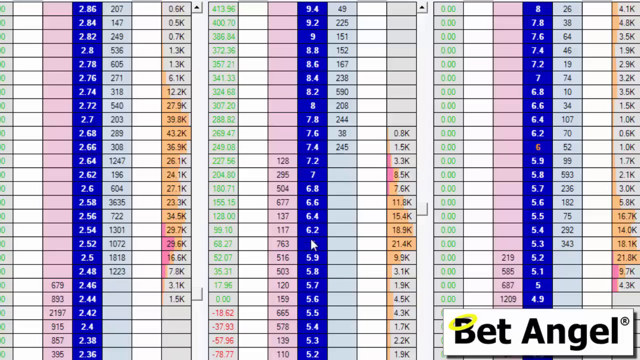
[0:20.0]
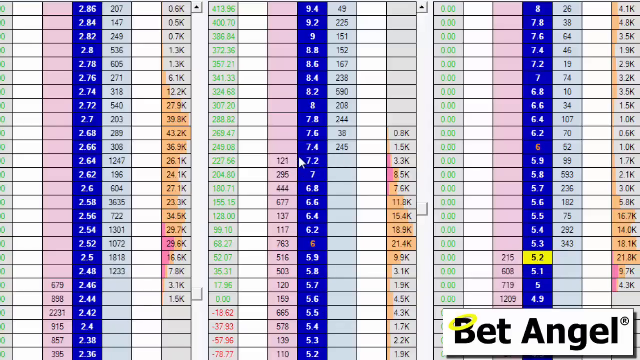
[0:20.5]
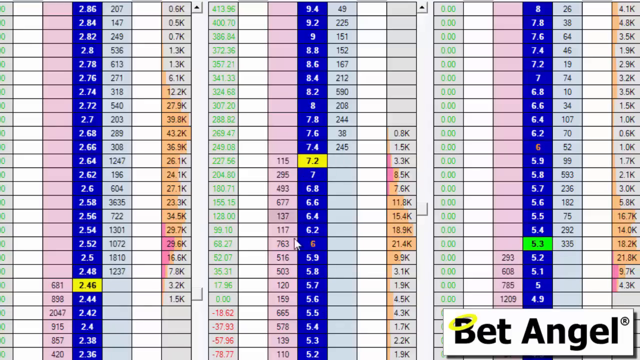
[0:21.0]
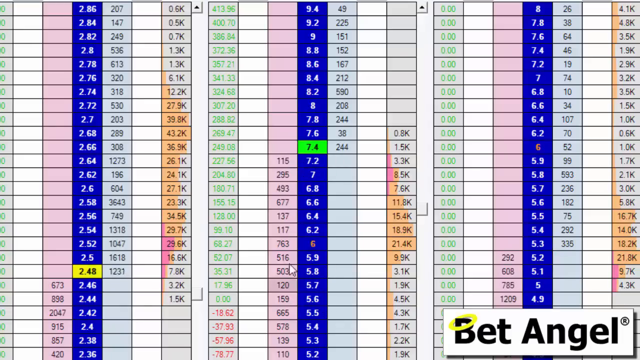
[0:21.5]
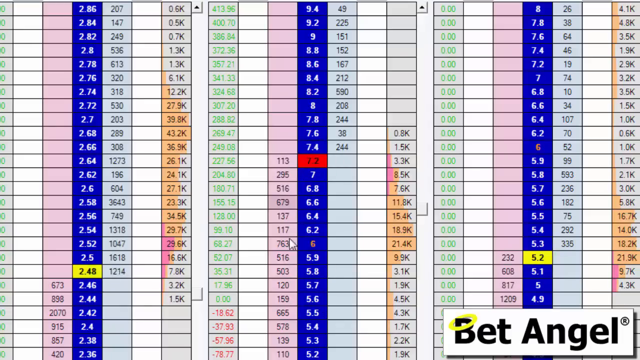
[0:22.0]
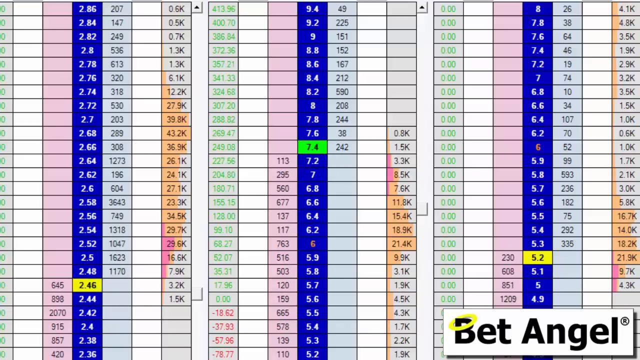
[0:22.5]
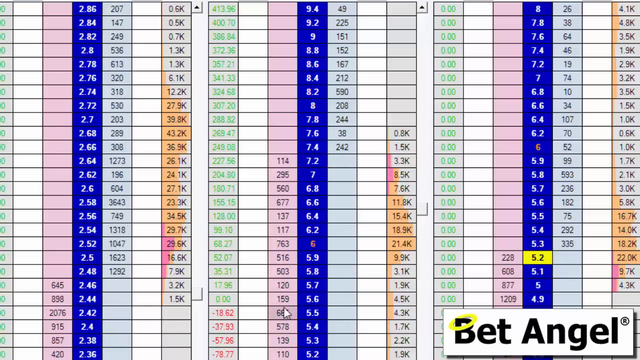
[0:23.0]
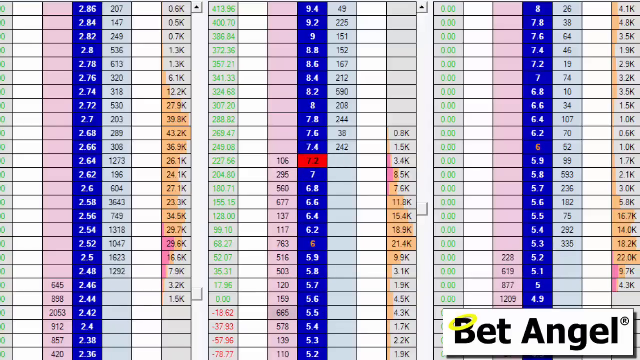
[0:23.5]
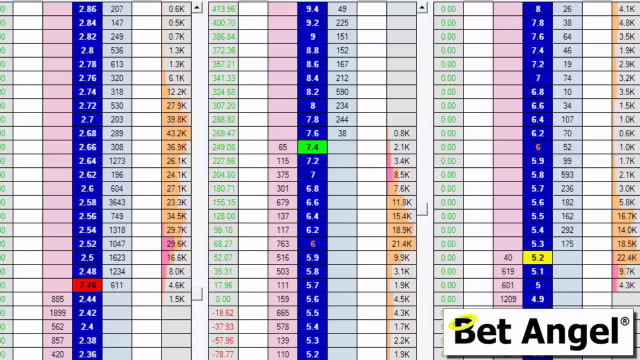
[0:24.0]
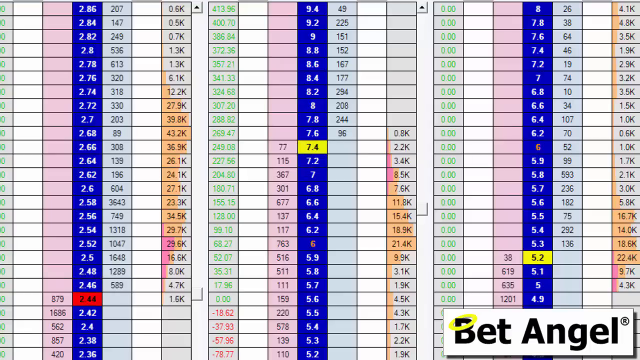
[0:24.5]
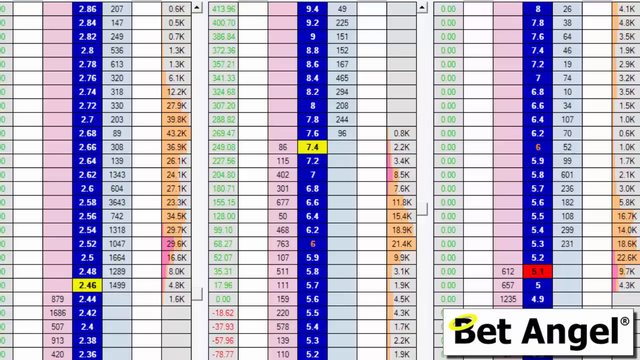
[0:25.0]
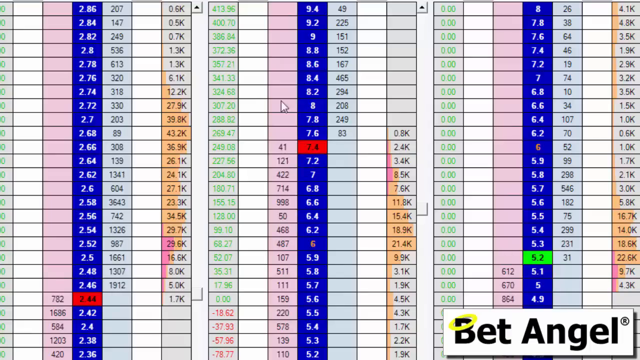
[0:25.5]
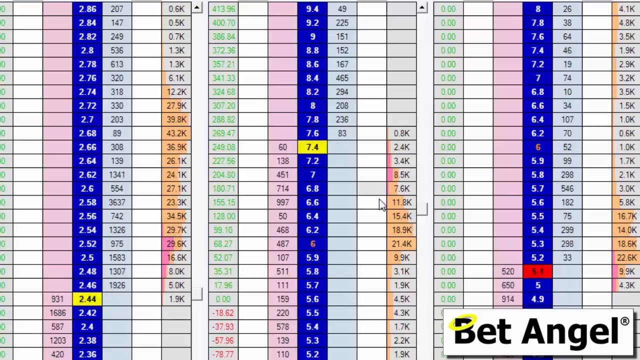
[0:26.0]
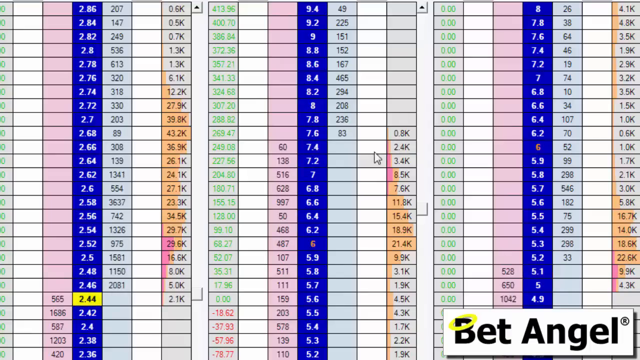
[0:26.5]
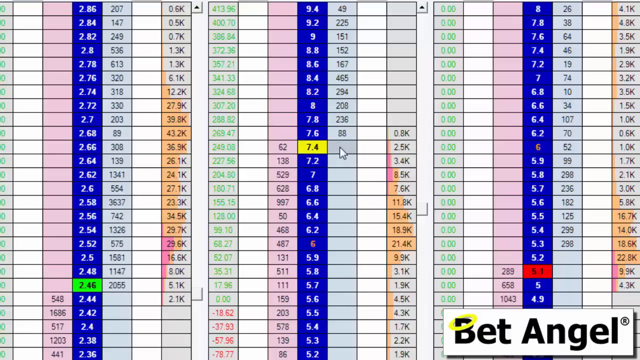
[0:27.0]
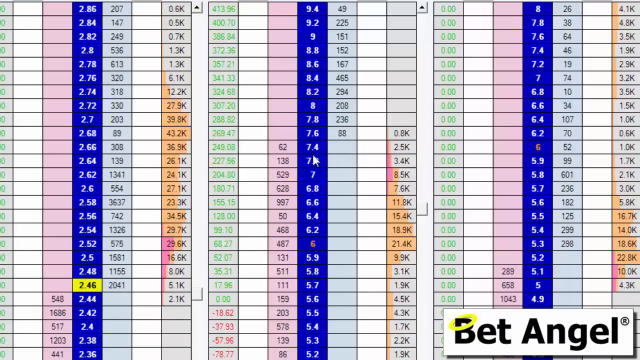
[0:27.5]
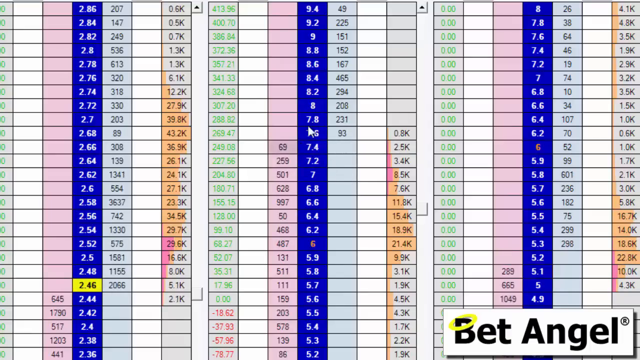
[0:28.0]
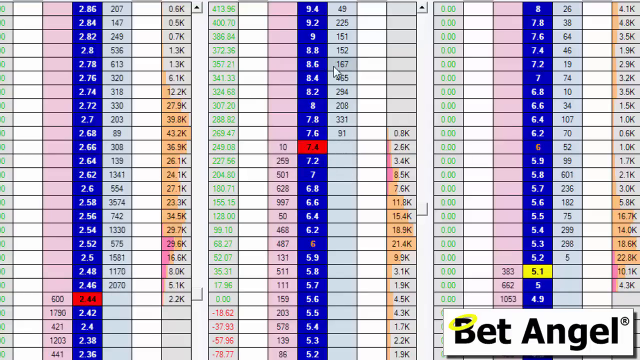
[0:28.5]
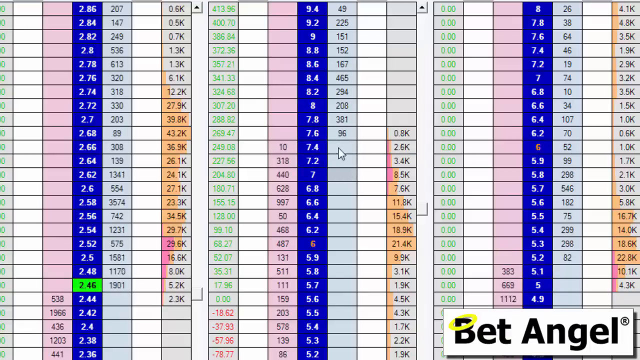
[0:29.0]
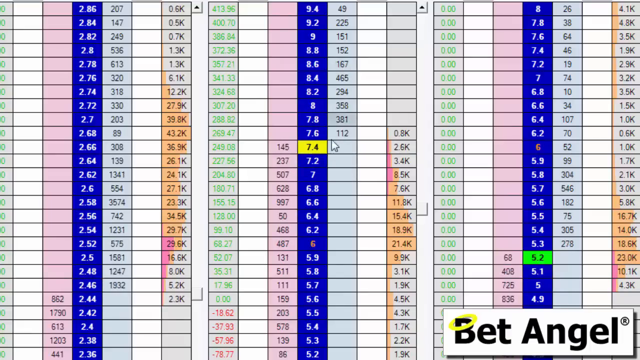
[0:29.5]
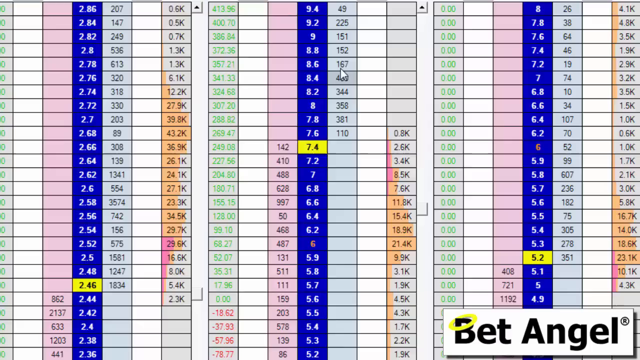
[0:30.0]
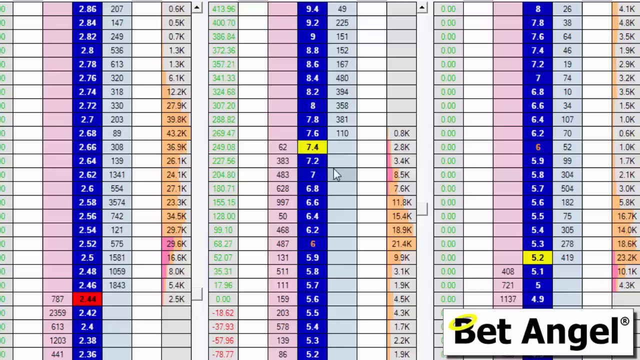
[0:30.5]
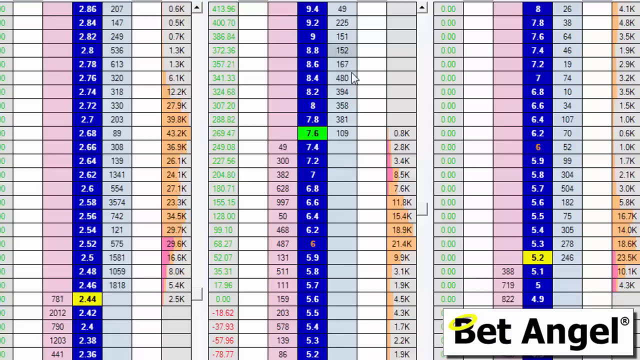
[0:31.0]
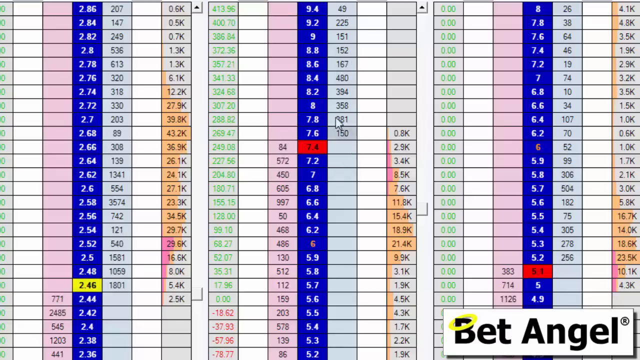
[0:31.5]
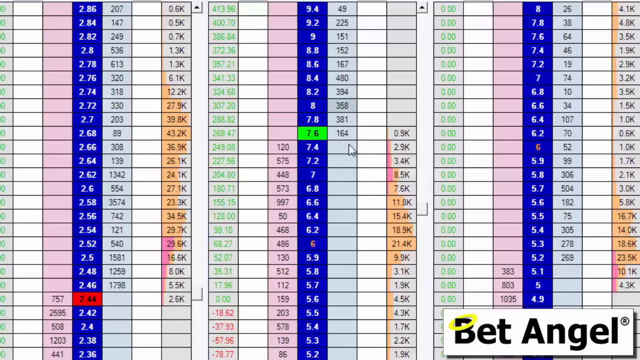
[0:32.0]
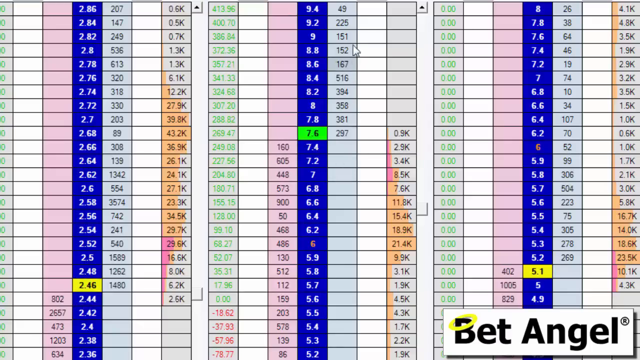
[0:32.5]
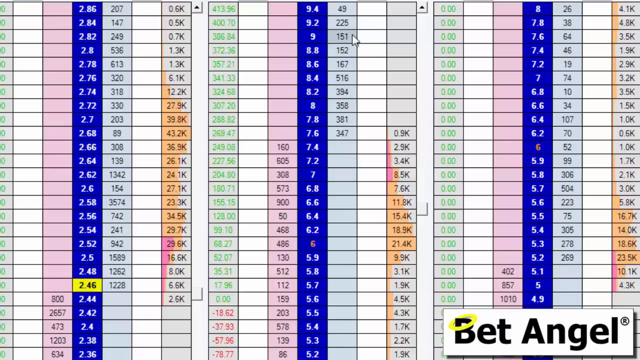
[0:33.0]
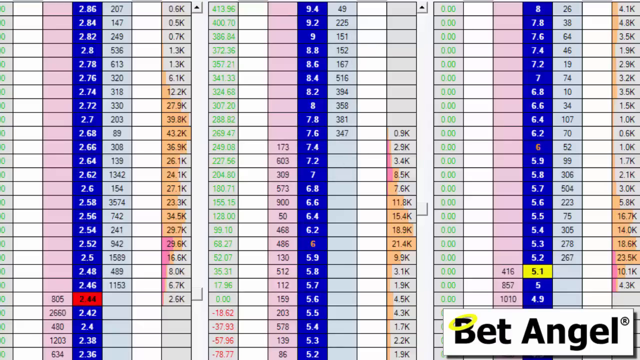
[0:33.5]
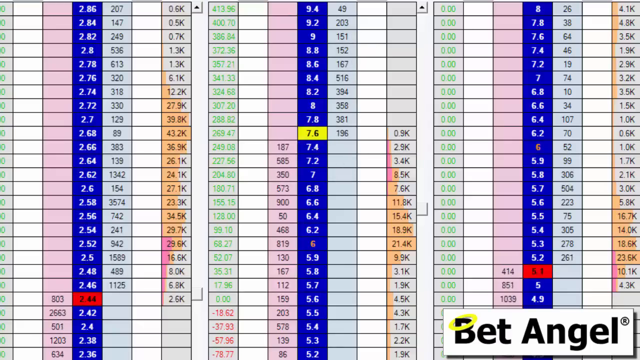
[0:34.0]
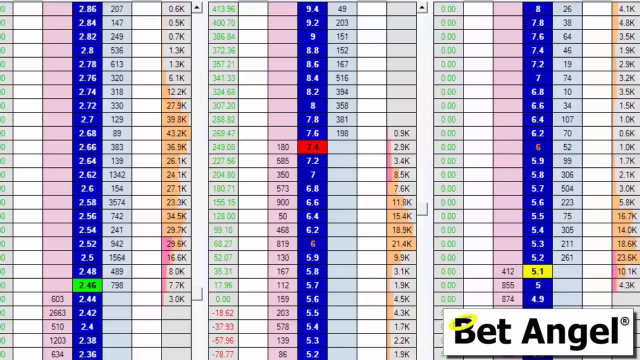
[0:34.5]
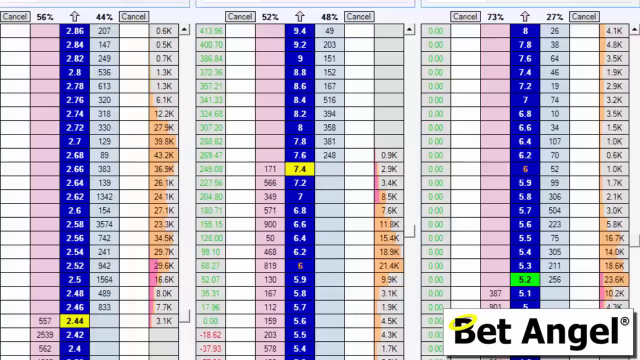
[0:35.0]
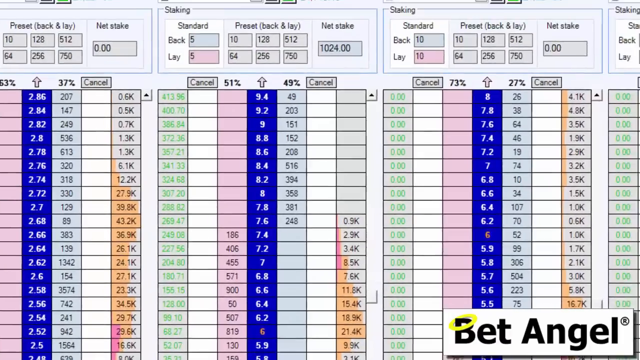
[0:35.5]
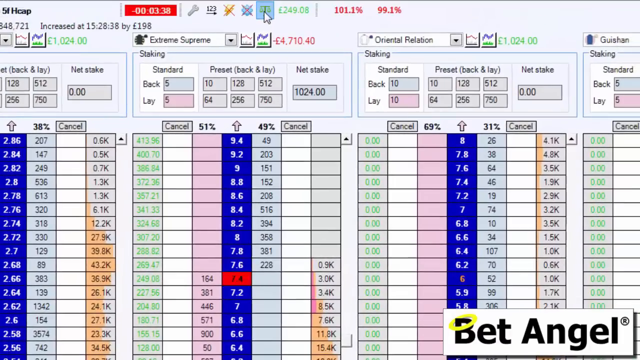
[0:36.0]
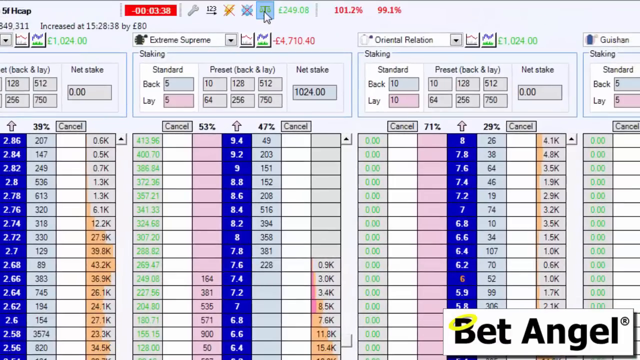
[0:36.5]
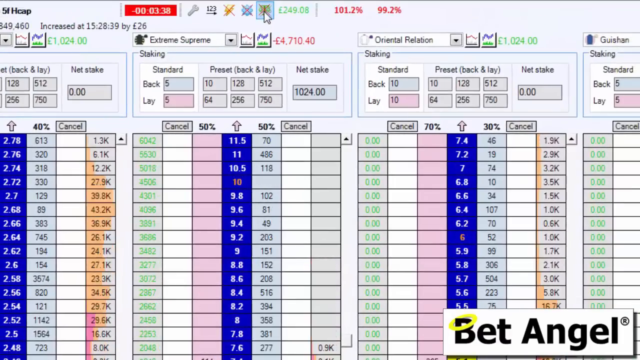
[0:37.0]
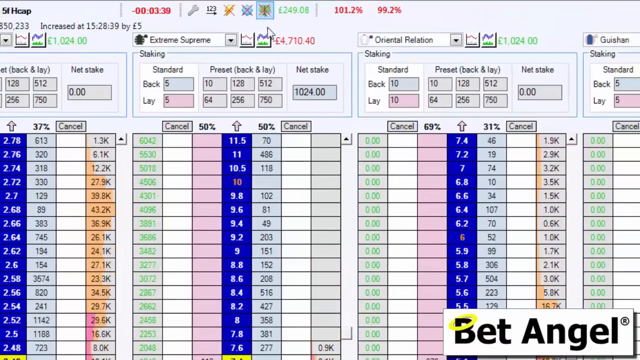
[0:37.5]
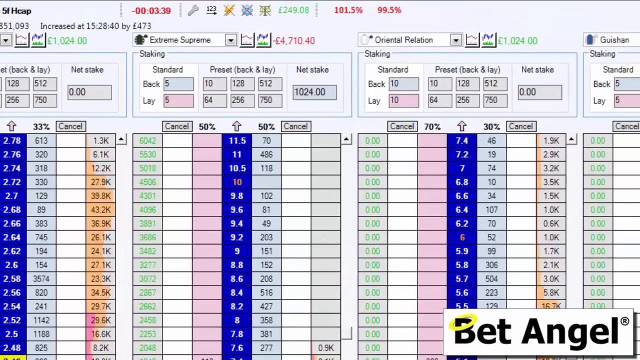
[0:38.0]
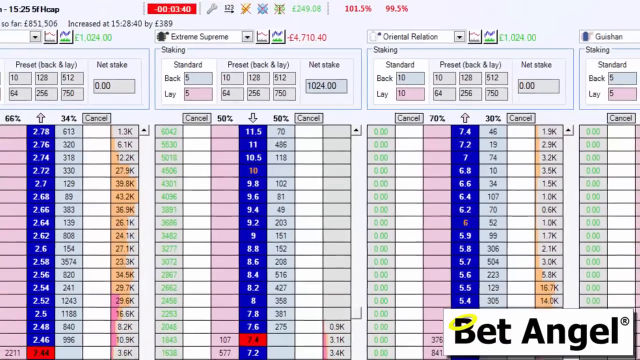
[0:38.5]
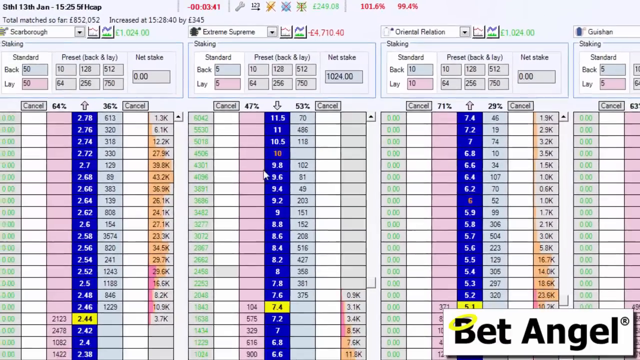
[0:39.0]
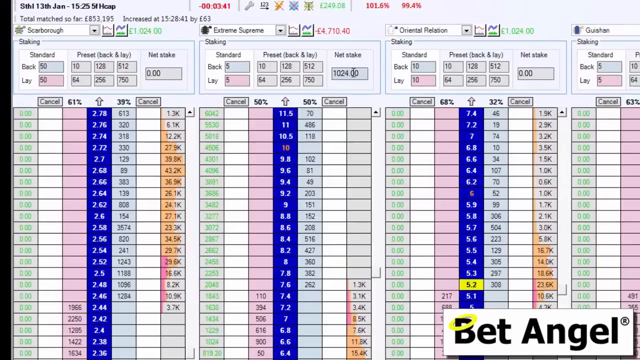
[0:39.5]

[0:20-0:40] A numbers graph fills the view, with "Bet angel" in the bottom right and a yellow halo over the B. An active cursor moves very quickly: it is first in the middle section, goes up to the top to net sales, and then remains in the middle section. In the blue section a bar goes up and down, changing from yellow to red to green, while the numbers in the pink section keep changing. Two other sections on either side have numbers doing the same thing. Each graph has shadings of orange in a gray strip. Numbers blink and change, with the digits actually moving, and the cursor goes up and down as if someone cannot decide what they want to see. Across the top of the entire graph is a red bar with numbers inside it that are also changing.